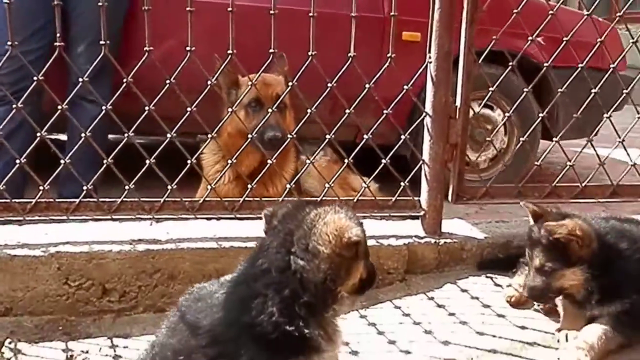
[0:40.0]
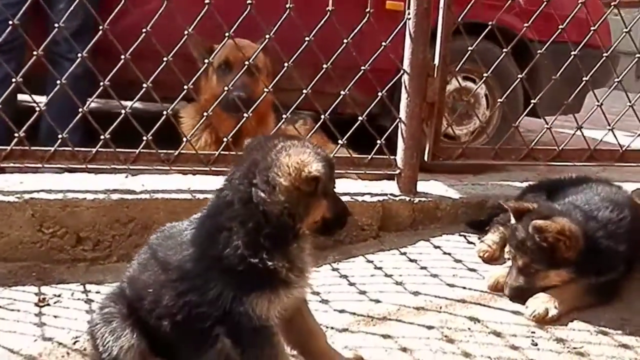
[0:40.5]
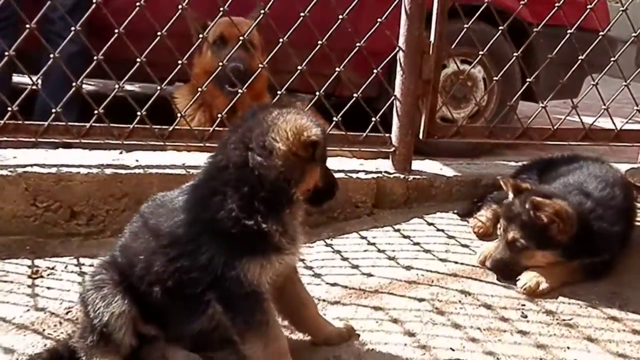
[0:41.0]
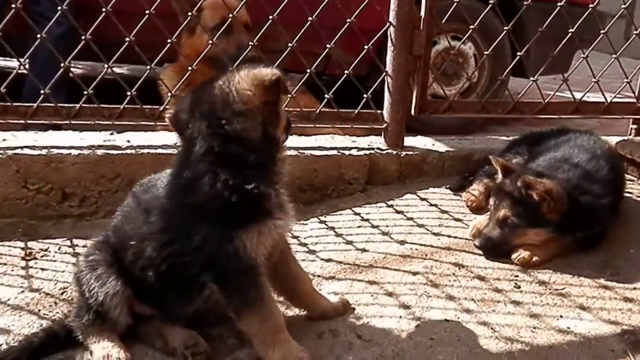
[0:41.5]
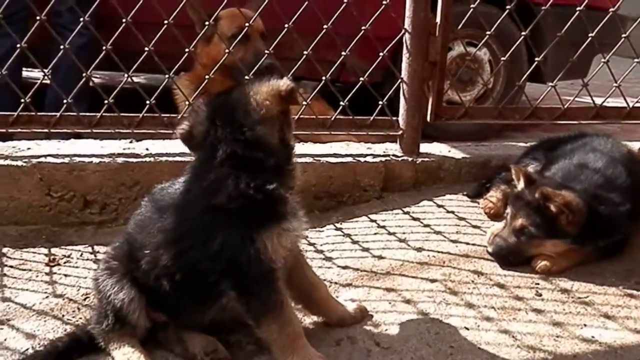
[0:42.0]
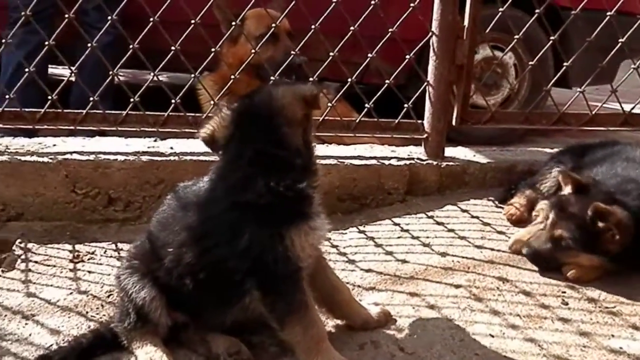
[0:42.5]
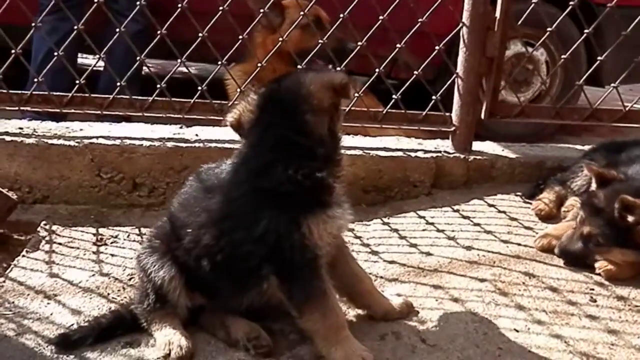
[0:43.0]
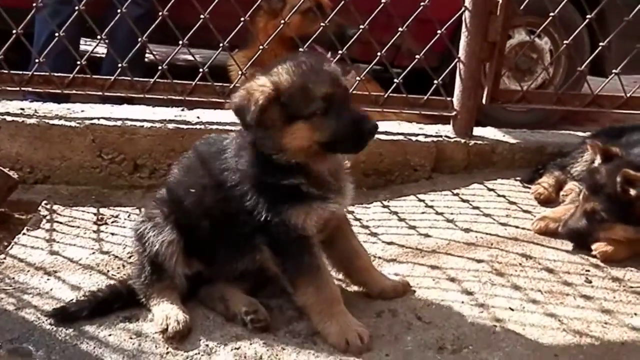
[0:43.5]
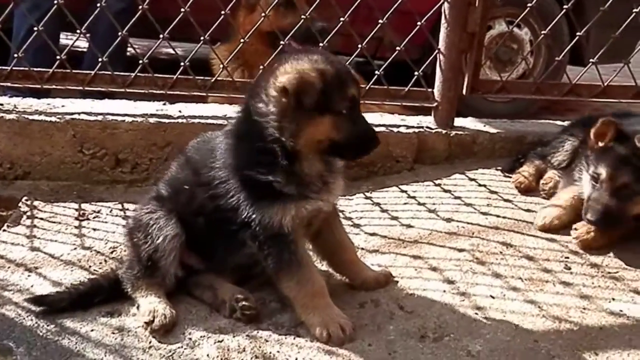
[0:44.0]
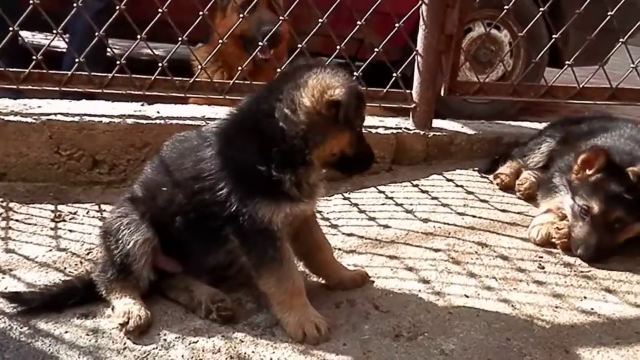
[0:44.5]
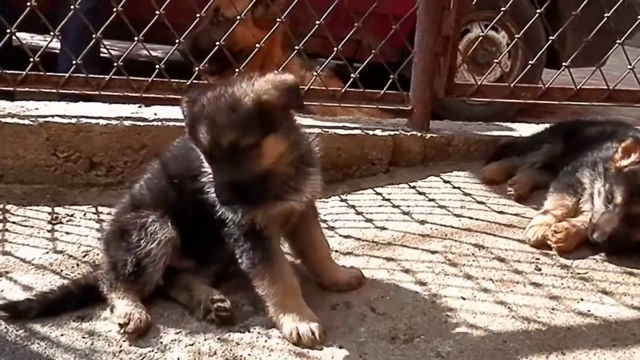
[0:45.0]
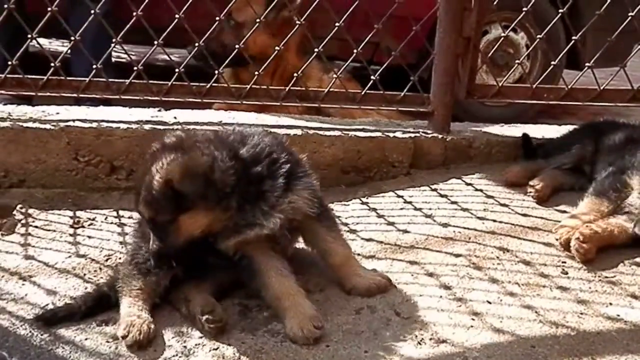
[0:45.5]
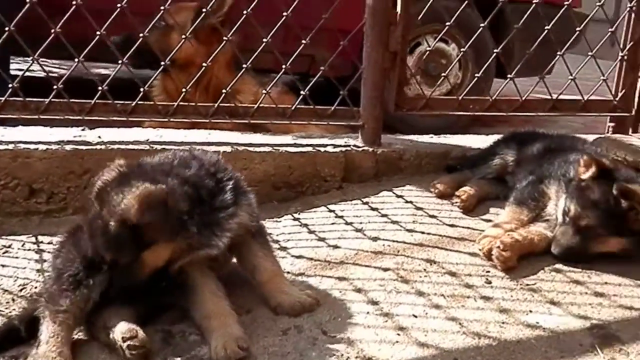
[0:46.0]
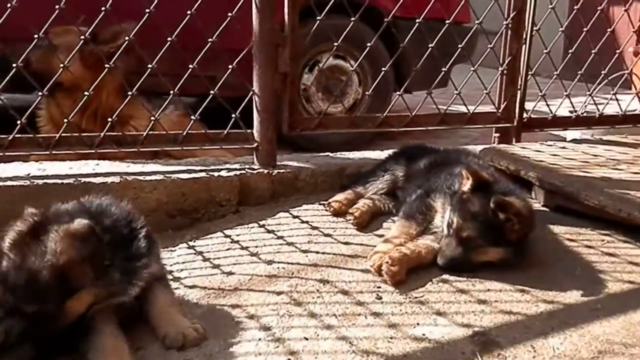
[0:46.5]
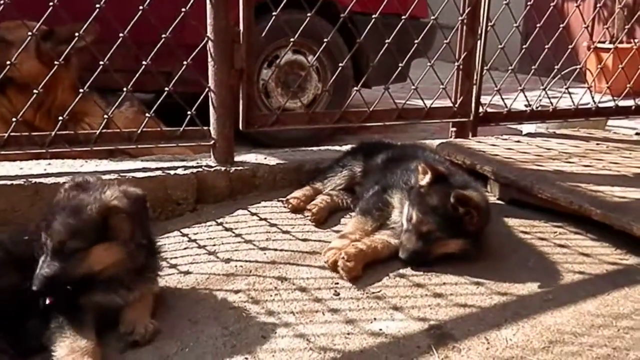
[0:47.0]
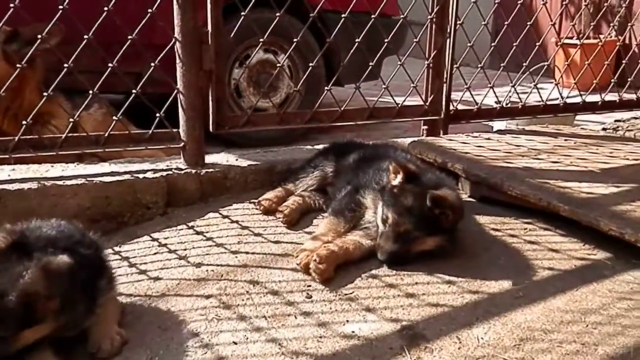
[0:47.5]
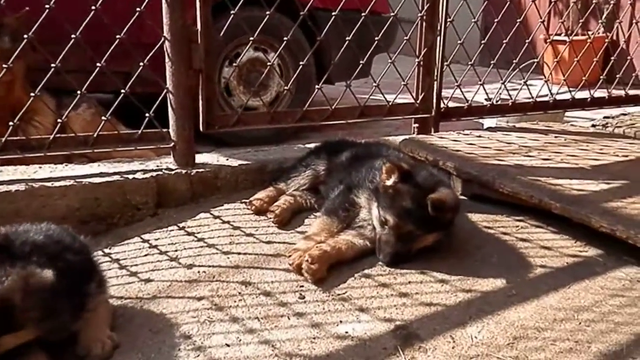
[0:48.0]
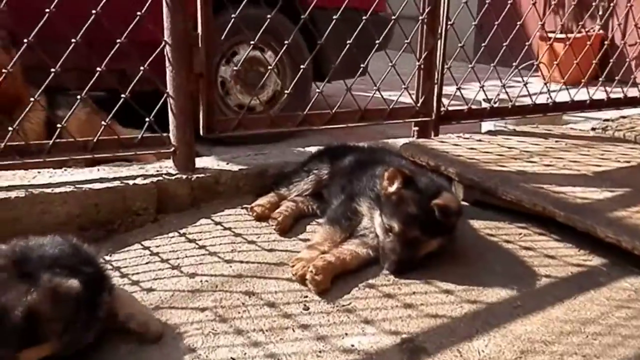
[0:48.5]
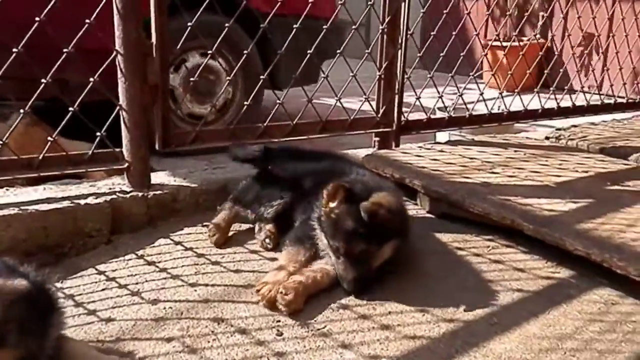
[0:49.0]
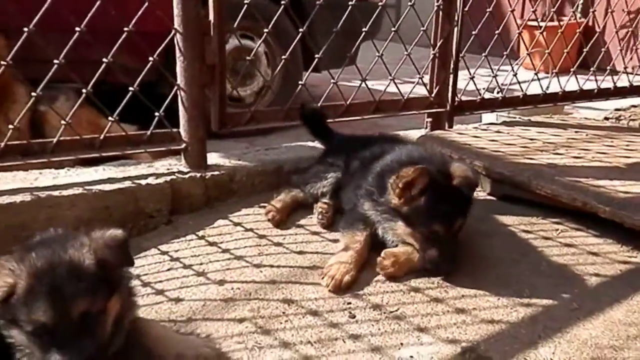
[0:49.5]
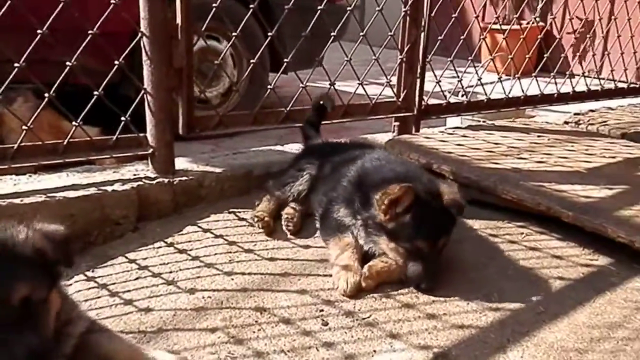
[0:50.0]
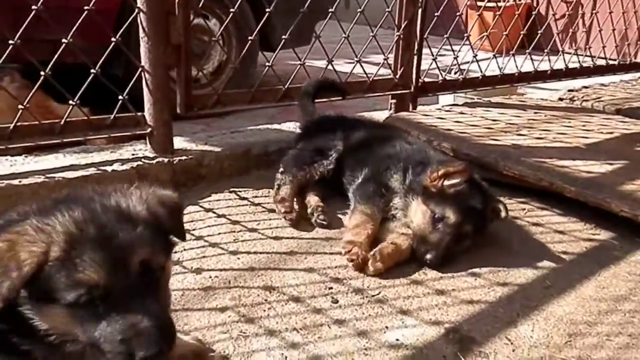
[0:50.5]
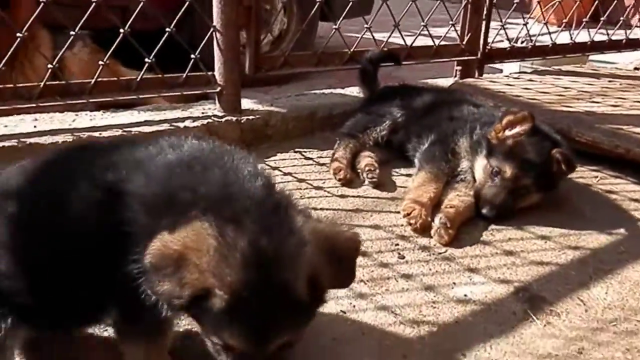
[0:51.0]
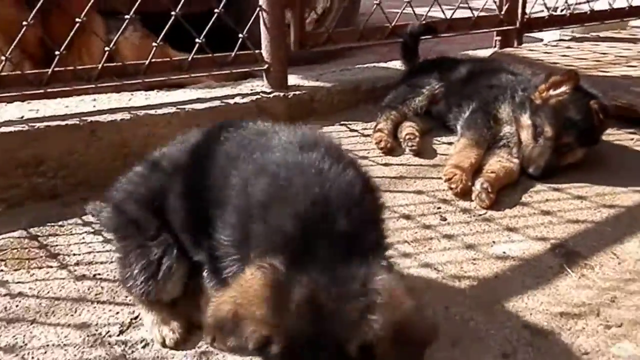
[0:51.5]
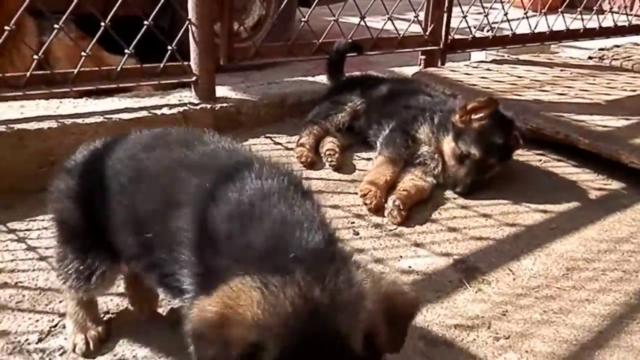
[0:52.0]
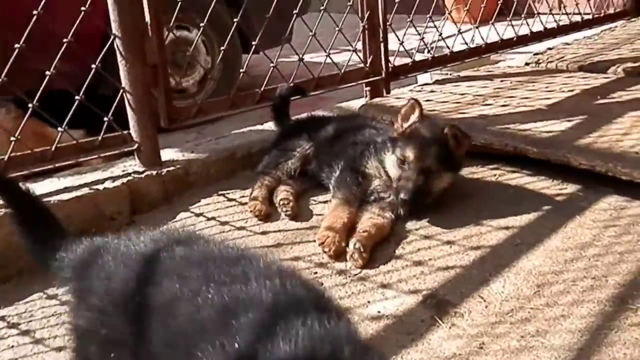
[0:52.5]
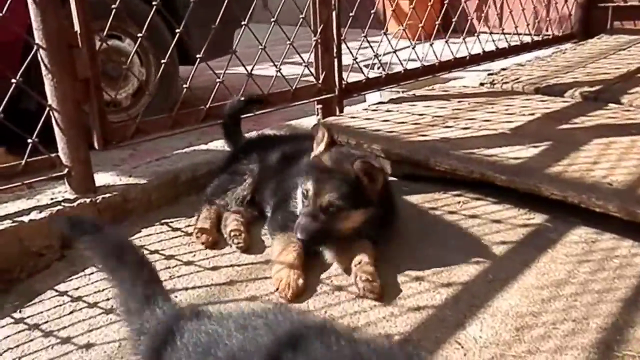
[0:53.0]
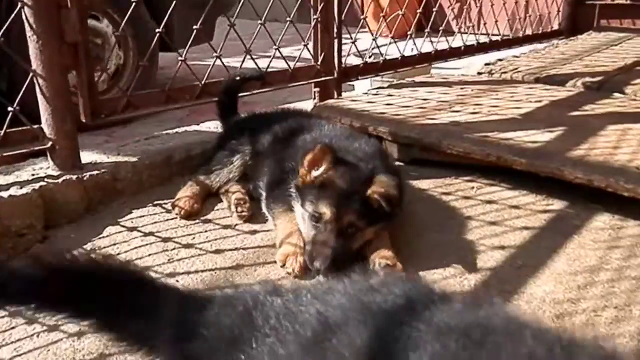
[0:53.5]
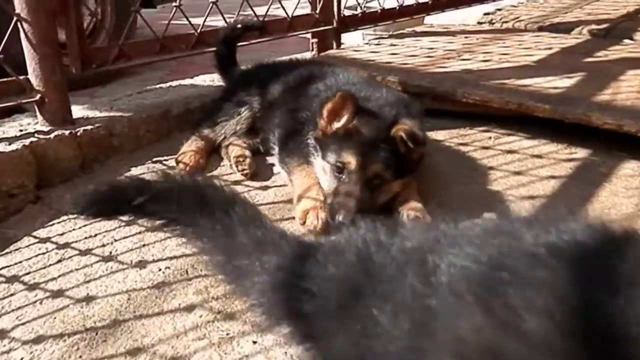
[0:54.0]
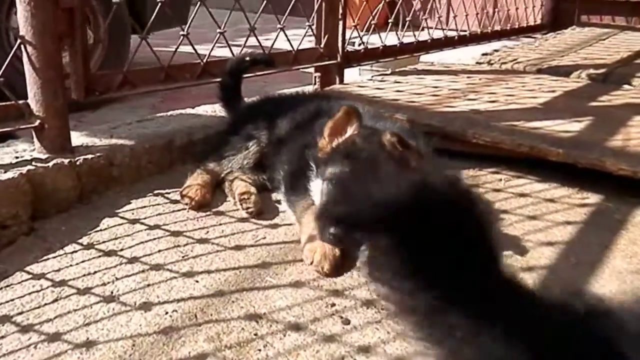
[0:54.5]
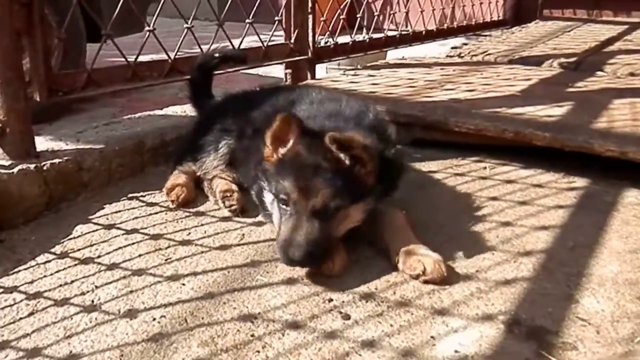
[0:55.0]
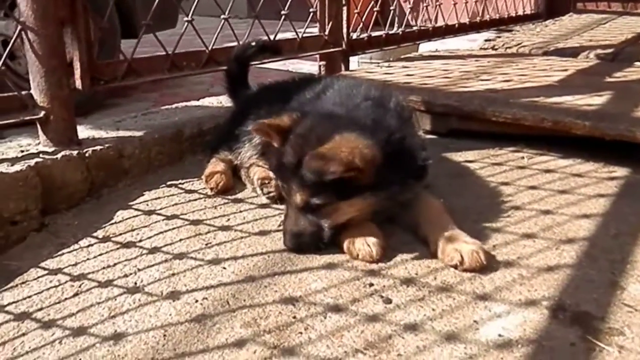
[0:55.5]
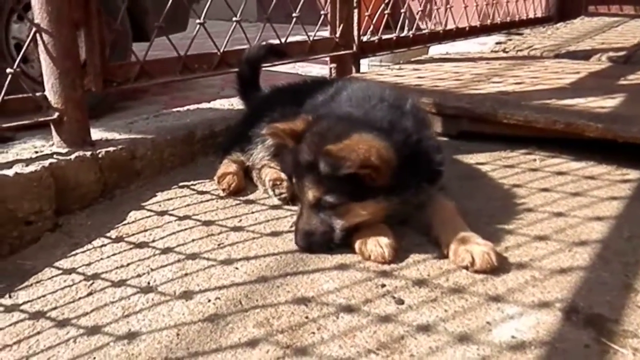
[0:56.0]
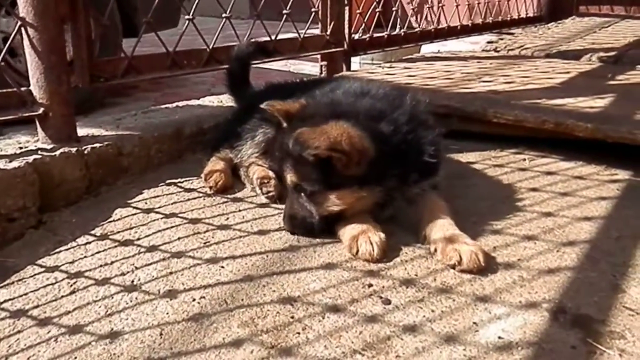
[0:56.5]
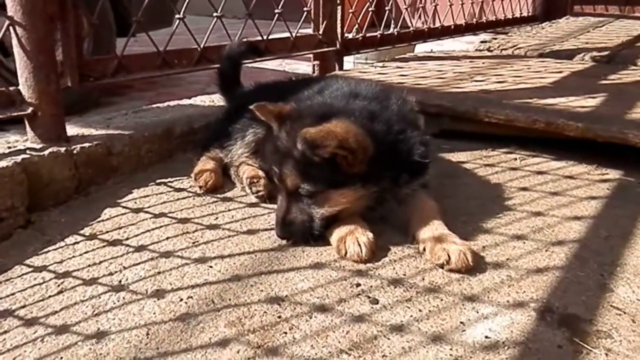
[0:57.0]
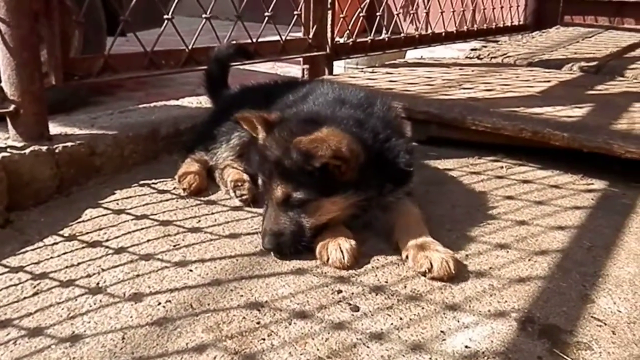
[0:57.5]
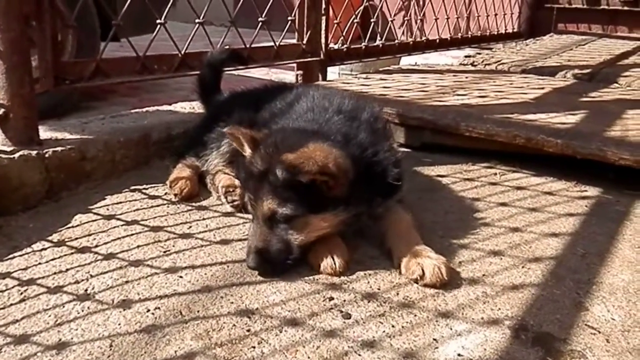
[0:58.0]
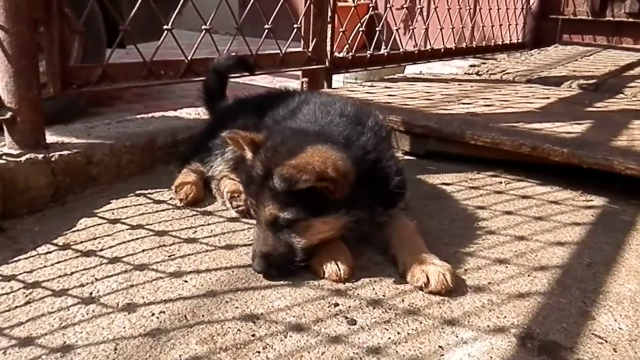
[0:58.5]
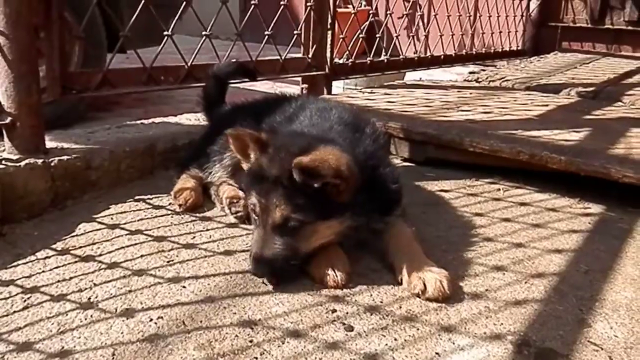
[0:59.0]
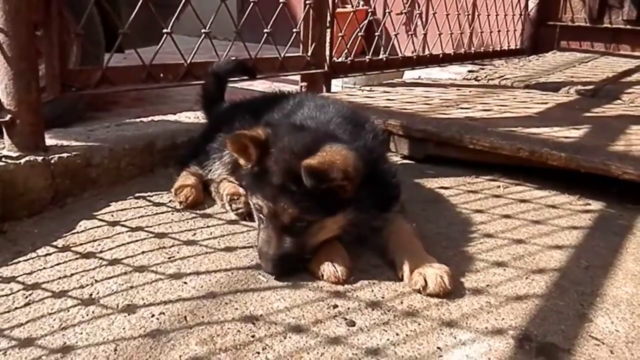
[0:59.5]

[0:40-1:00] A red car is visible outside the yard with a dog next to it, and a man in navy blue jeans and a navy blue jacket stands leaning on the car. Inside the yard, the two dogs are still playing, not bothered by the car or by the dog outside. Only the two of them are inside; no other person is shown inside the yard.